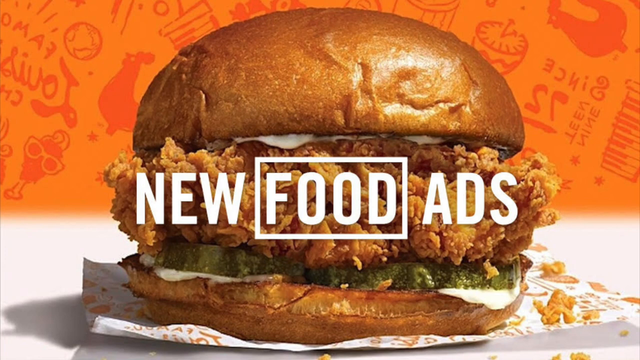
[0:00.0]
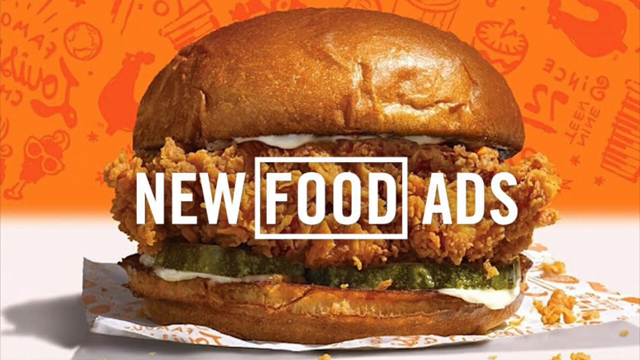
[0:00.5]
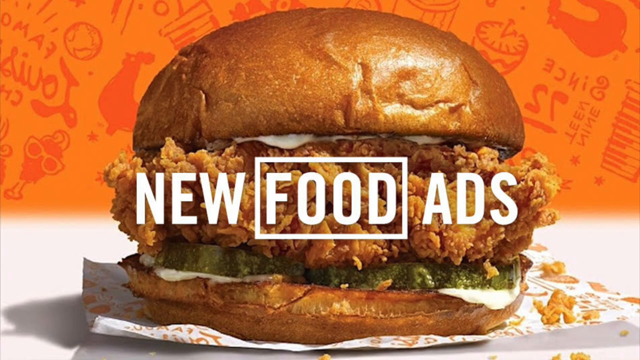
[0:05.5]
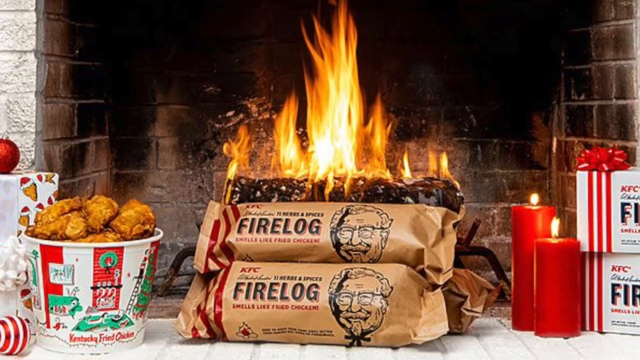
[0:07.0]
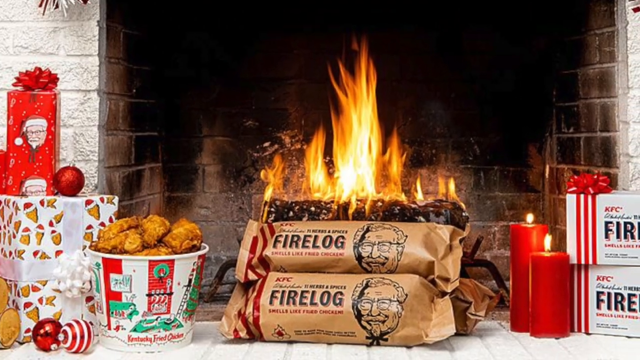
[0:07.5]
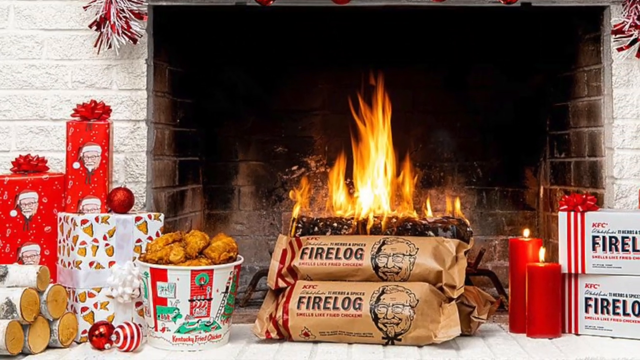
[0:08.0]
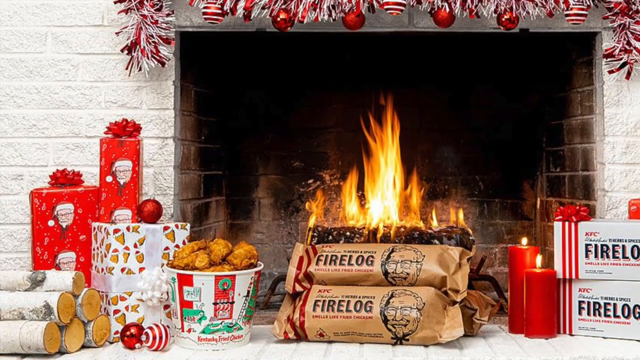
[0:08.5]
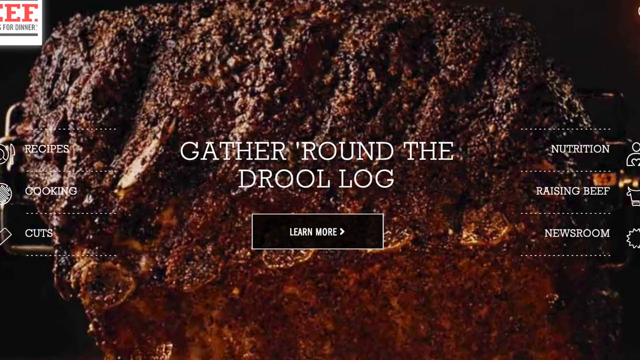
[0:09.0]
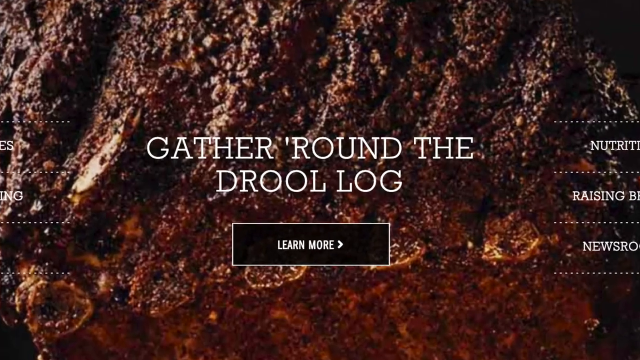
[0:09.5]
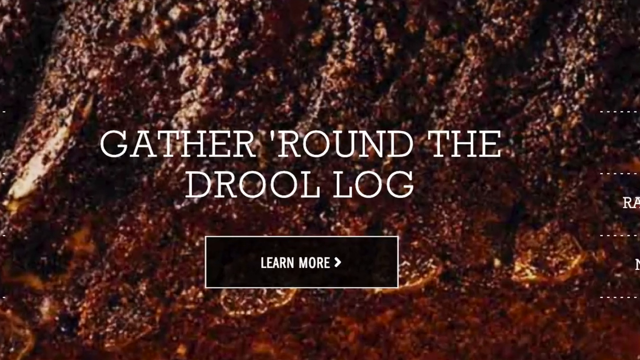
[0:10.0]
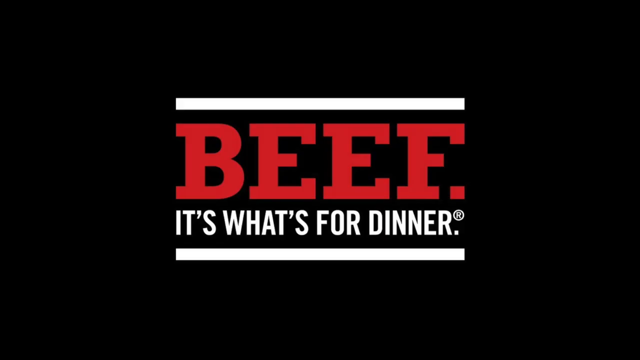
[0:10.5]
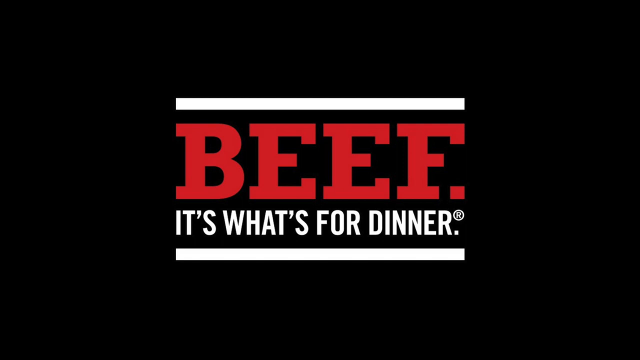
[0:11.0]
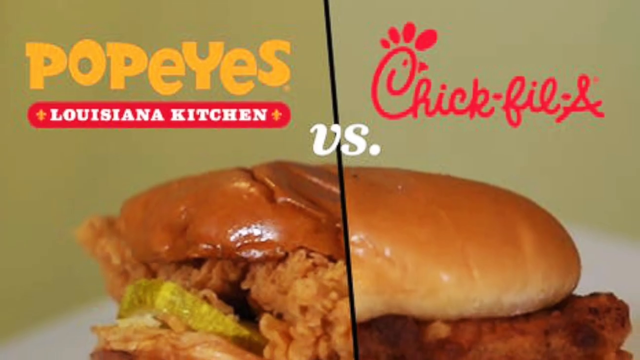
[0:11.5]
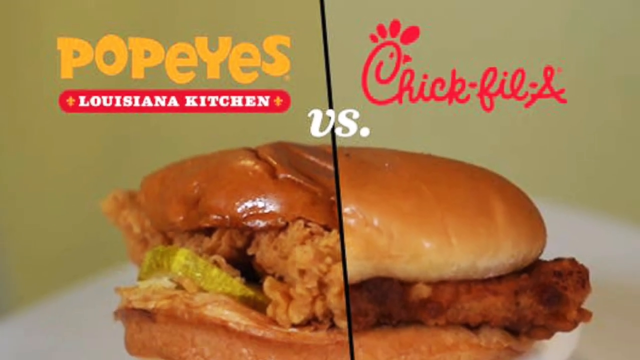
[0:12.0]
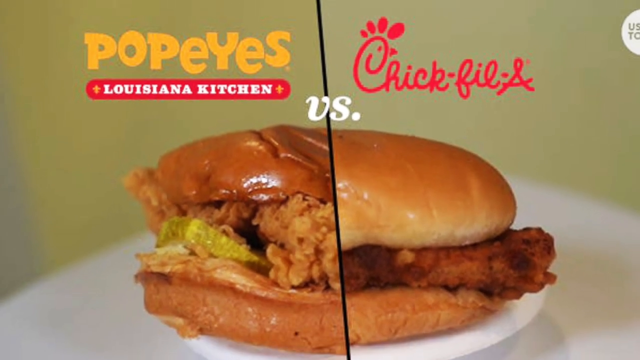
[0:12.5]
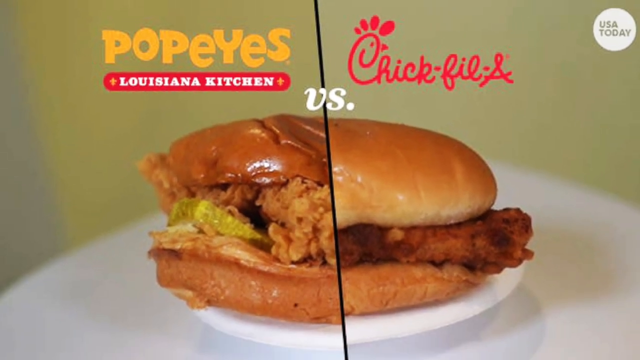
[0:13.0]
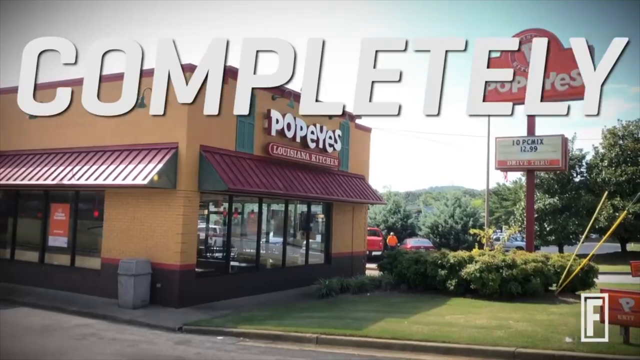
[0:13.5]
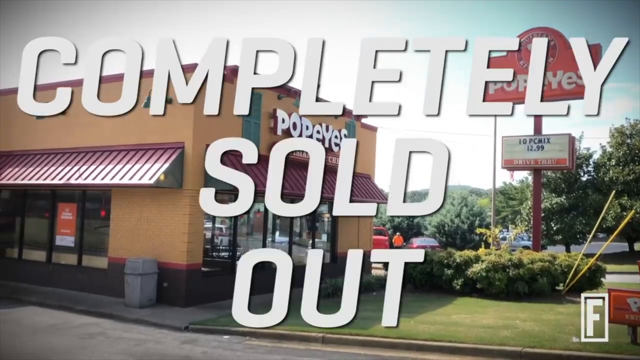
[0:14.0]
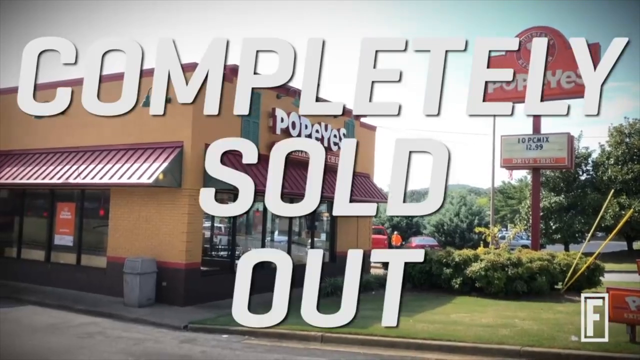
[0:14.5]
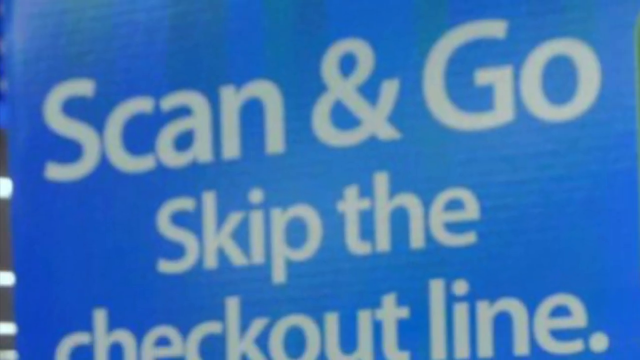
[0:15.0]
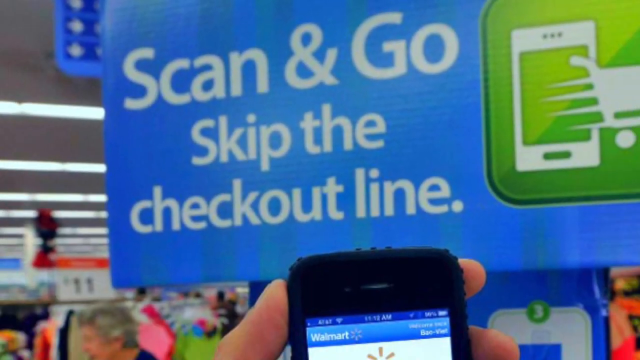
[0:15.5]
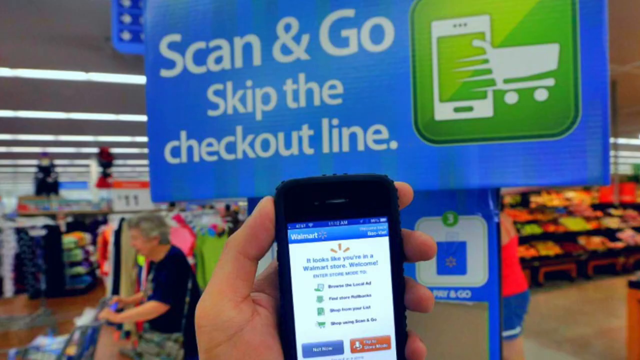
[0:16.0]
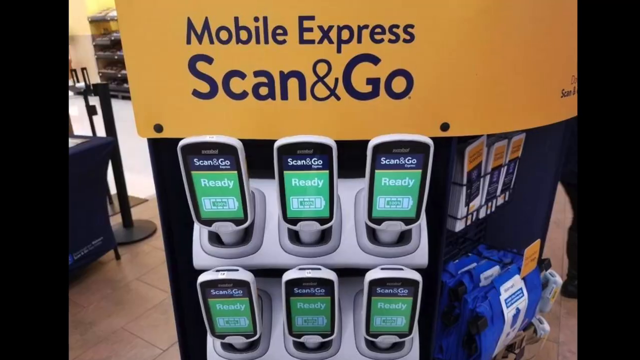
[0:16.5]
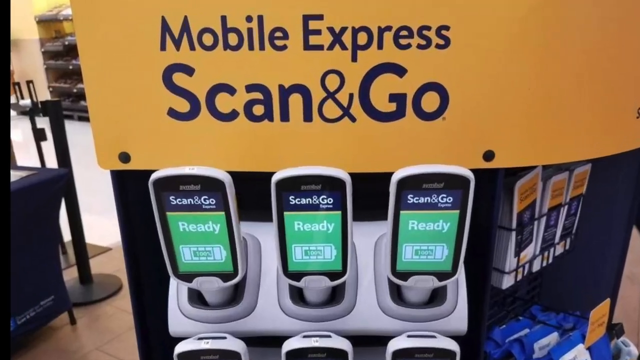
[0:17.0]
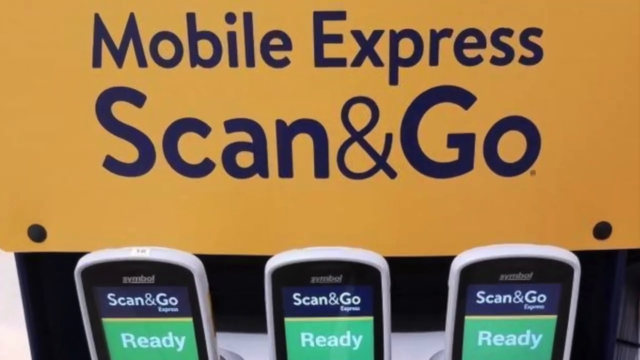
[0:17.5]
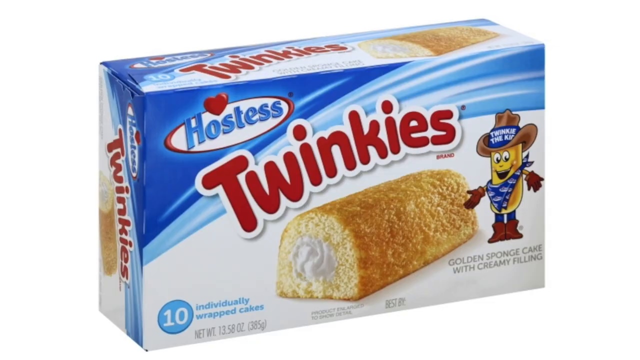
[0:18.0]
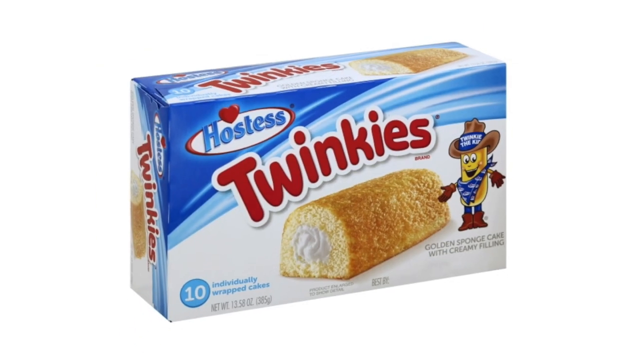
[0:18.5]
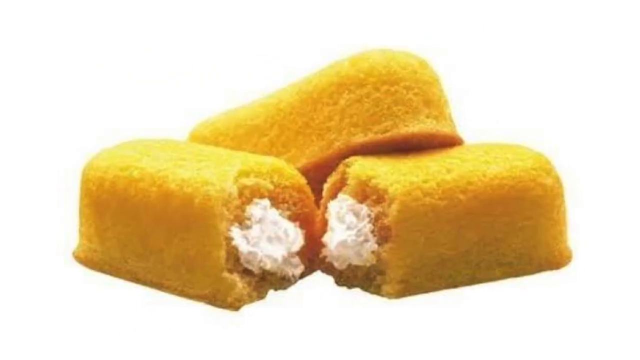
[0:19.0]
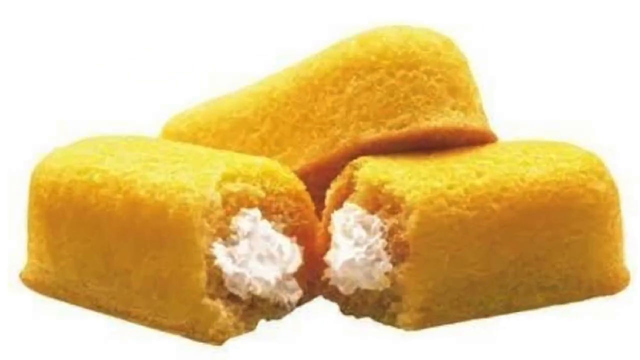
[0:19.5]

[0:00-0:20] A side view of a burger appears with white text superimposed over it reading "New Food ADS". Next, some food is in front of a log fire; the food appears to be from Kentucky Fried Chicken, and one of the items is called fire log. A close-up follows of what looks like a Christmas pudding, with white text over it reading "gather around the drool log" and, underneath, a black box with a learn more button. The screen then turns all black, with "beef it's what's for dinner" in the center in red and white text. Fast food from Popeye's Louisiana Kitchen is shown, followed by the outside of a Popeye store with "completely sold" superimposed over the picture. The video then shows scan and go scanners in a store, and finally Twinkies, both unwrapped and in their normal box.